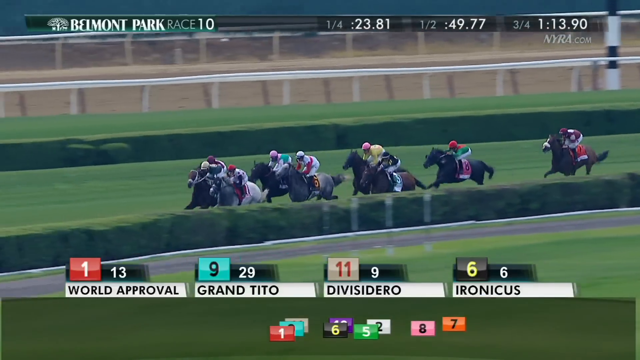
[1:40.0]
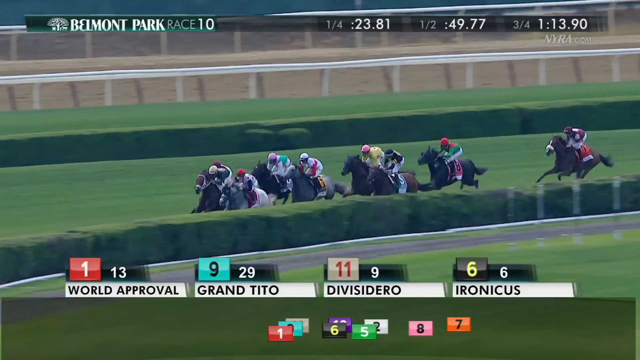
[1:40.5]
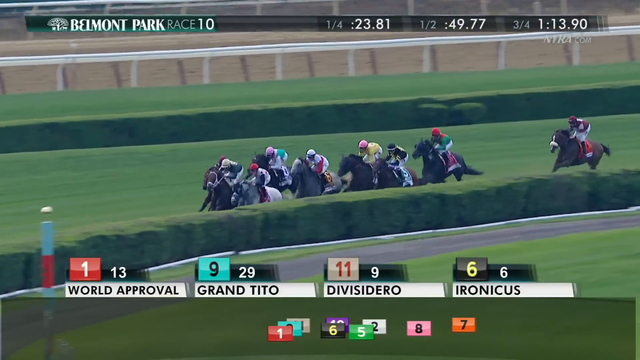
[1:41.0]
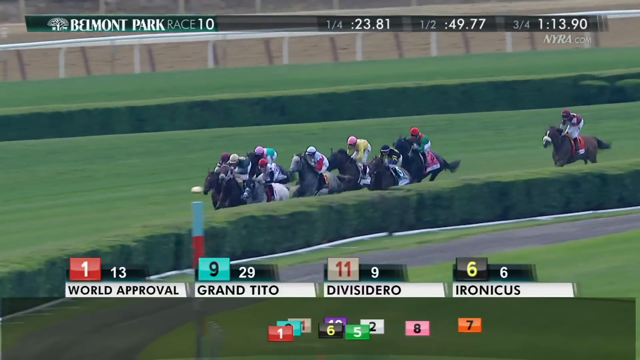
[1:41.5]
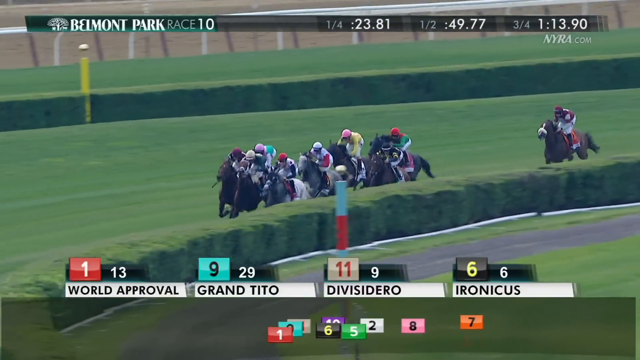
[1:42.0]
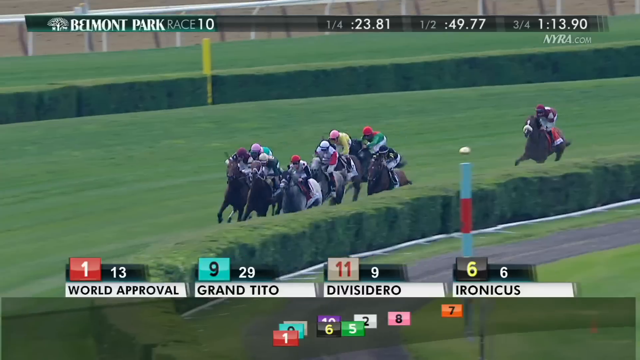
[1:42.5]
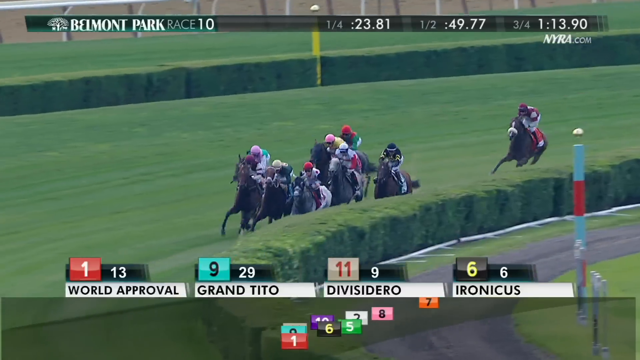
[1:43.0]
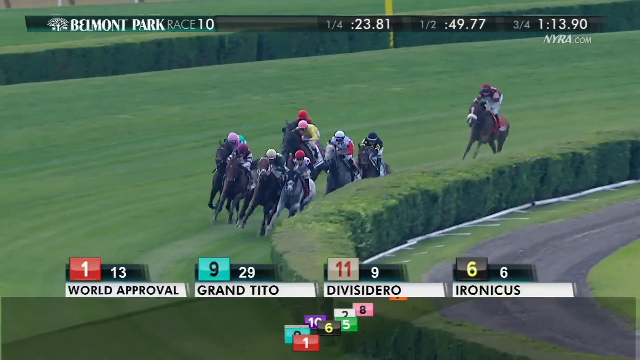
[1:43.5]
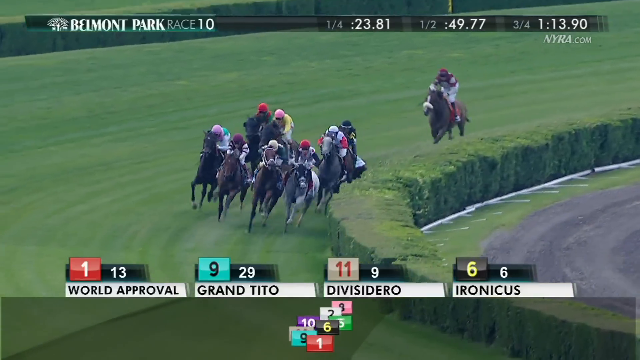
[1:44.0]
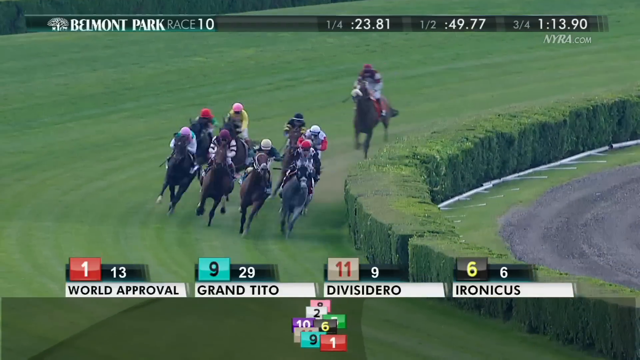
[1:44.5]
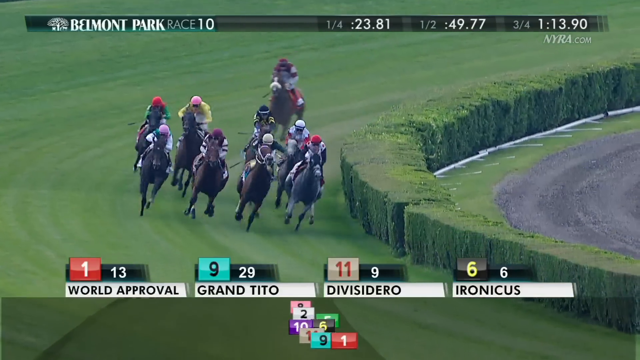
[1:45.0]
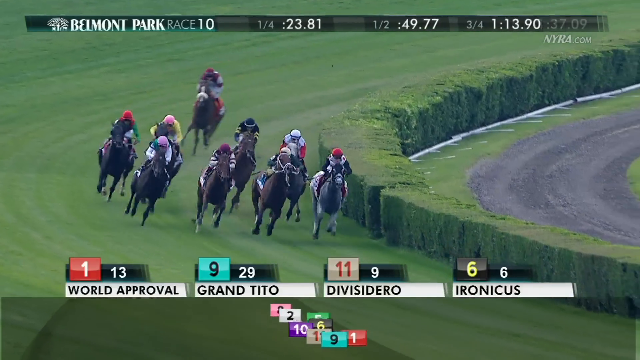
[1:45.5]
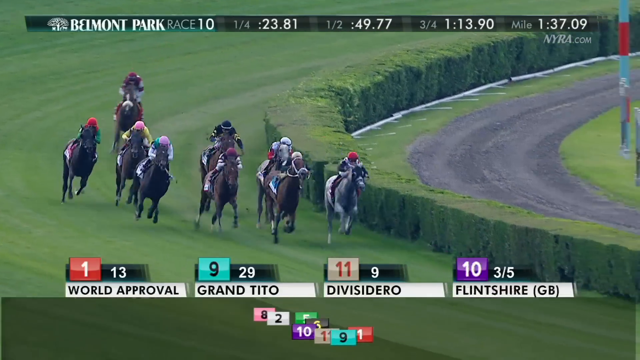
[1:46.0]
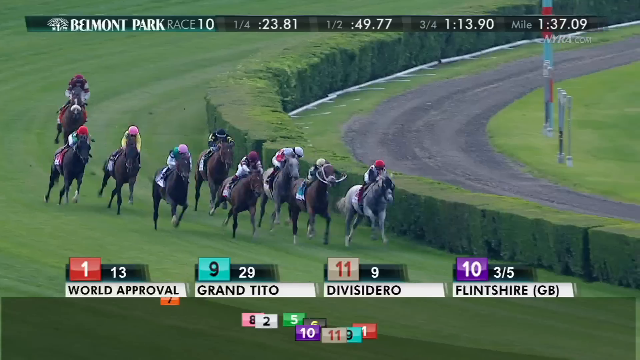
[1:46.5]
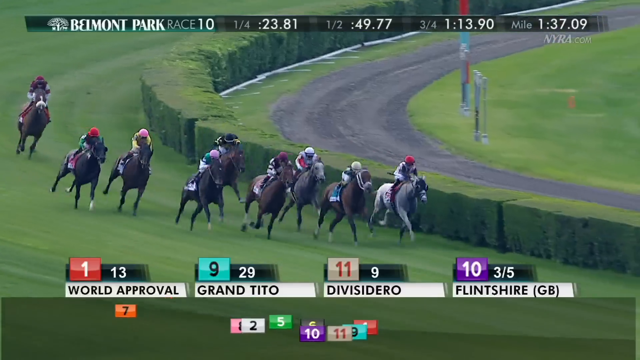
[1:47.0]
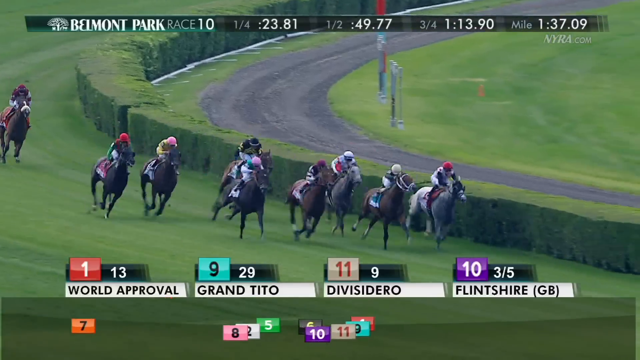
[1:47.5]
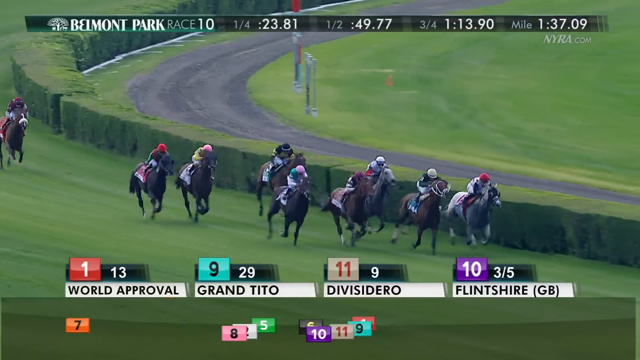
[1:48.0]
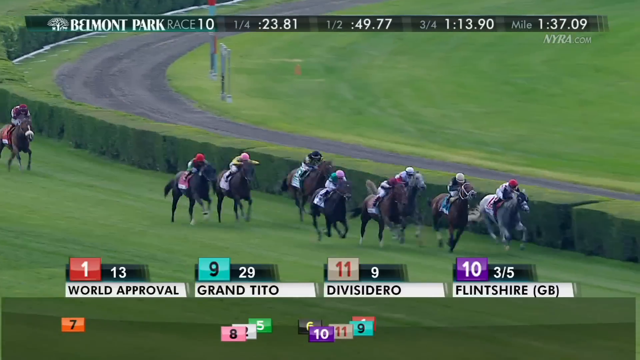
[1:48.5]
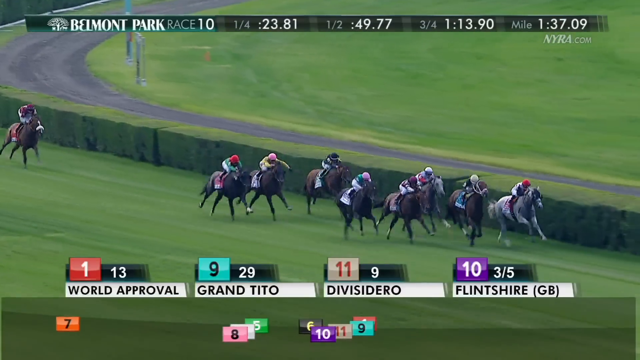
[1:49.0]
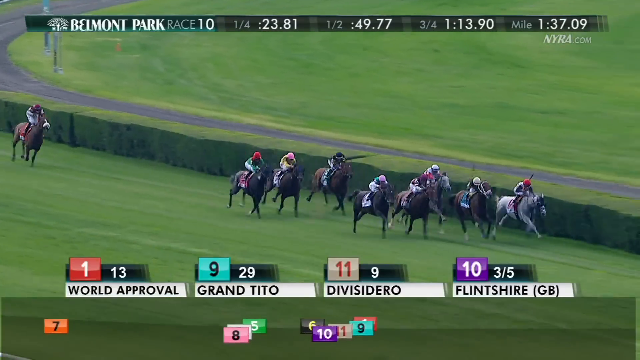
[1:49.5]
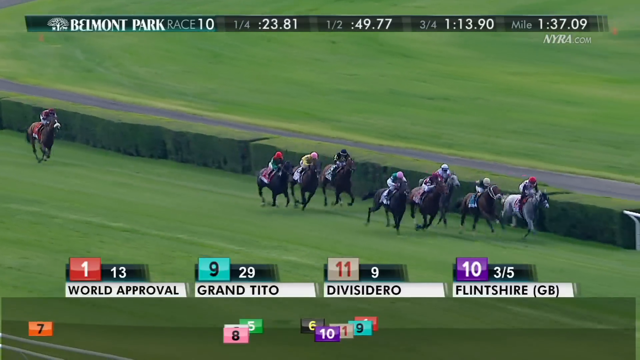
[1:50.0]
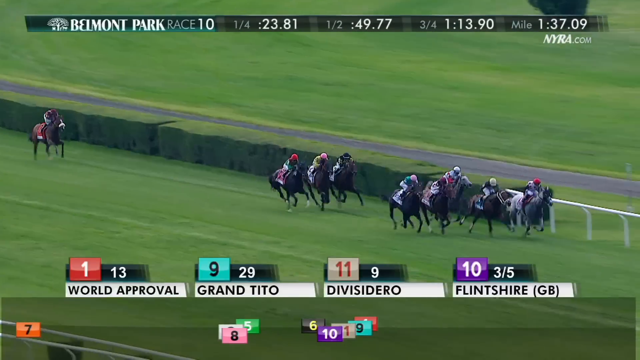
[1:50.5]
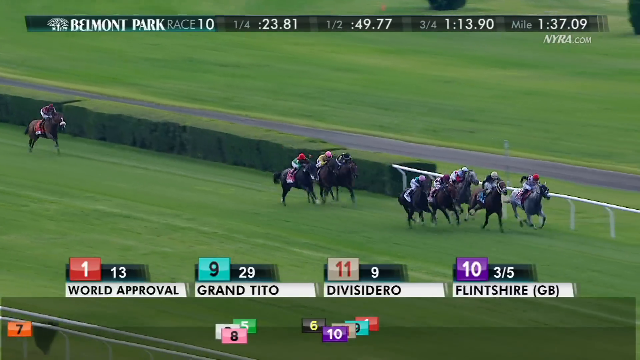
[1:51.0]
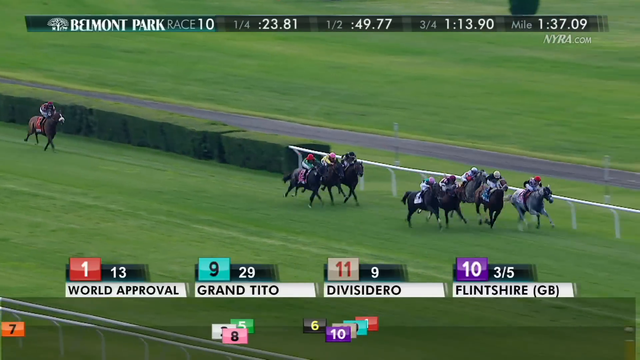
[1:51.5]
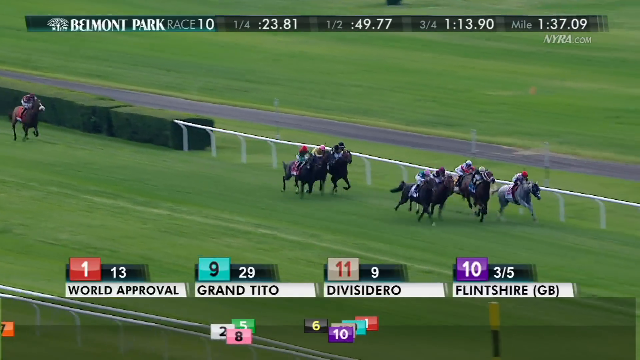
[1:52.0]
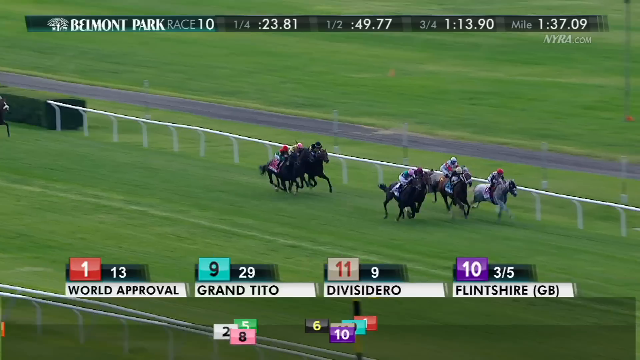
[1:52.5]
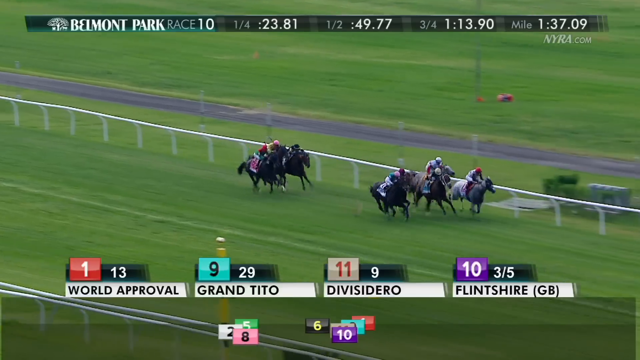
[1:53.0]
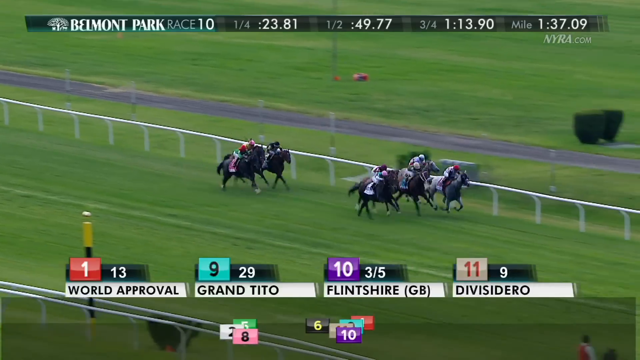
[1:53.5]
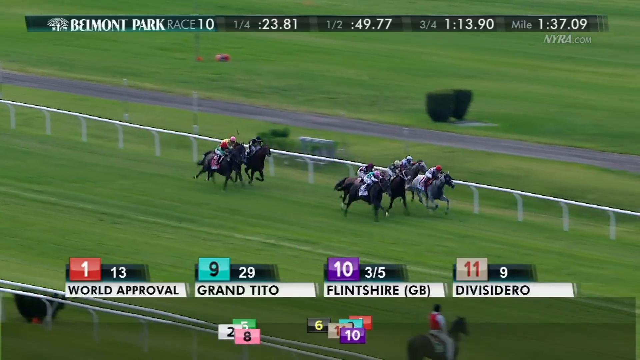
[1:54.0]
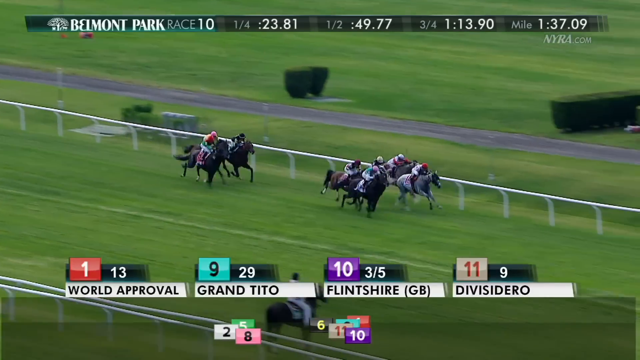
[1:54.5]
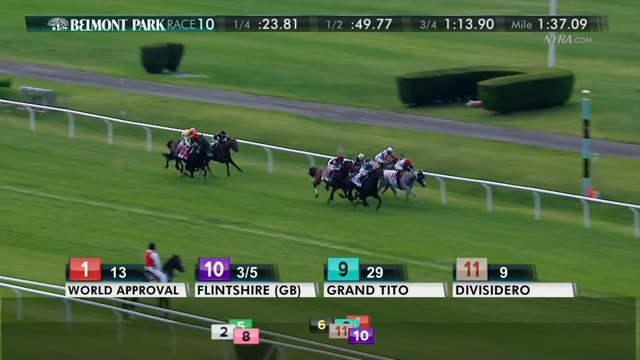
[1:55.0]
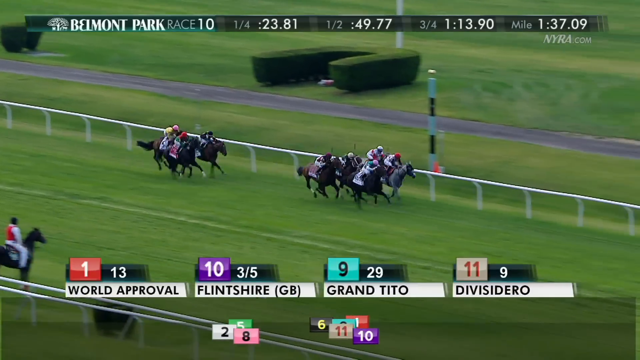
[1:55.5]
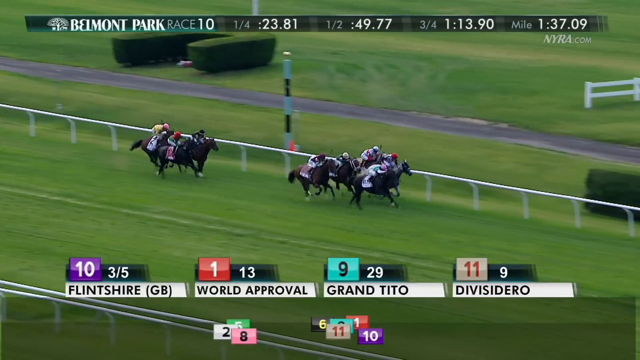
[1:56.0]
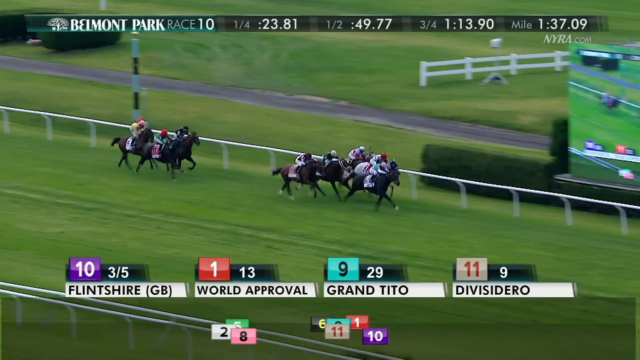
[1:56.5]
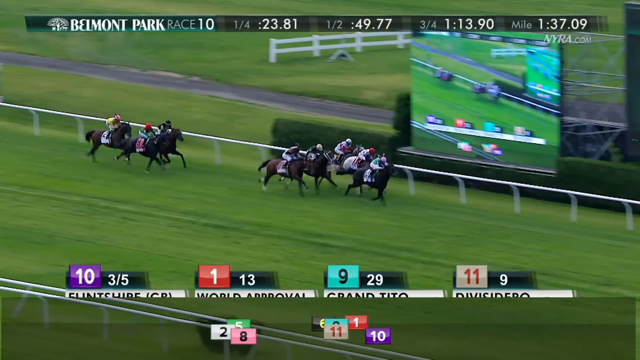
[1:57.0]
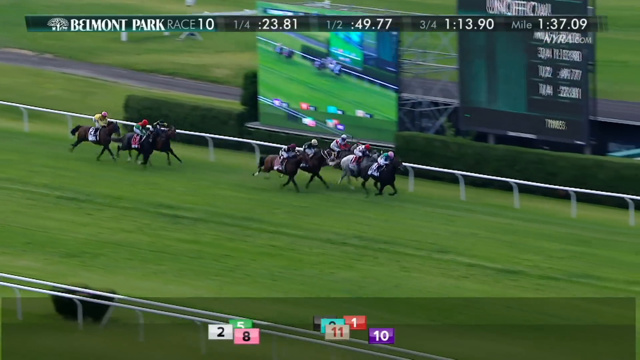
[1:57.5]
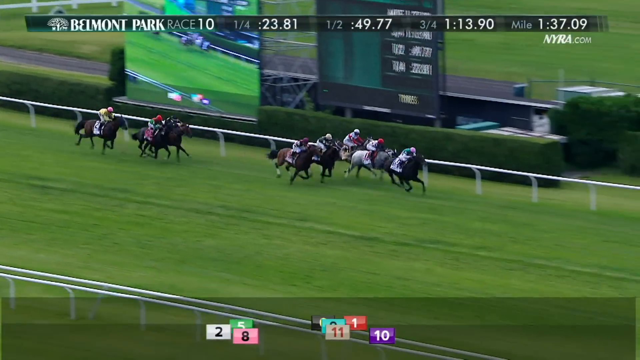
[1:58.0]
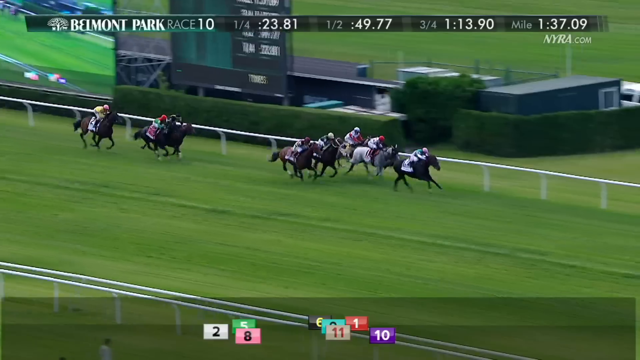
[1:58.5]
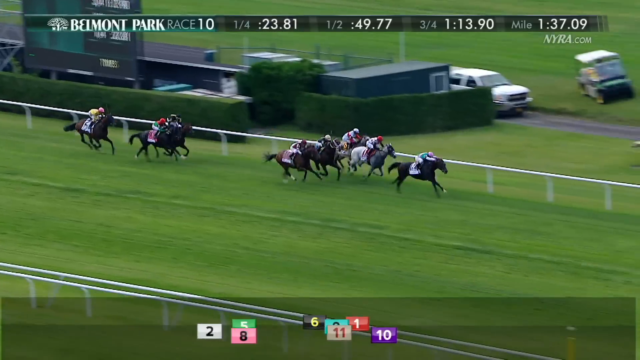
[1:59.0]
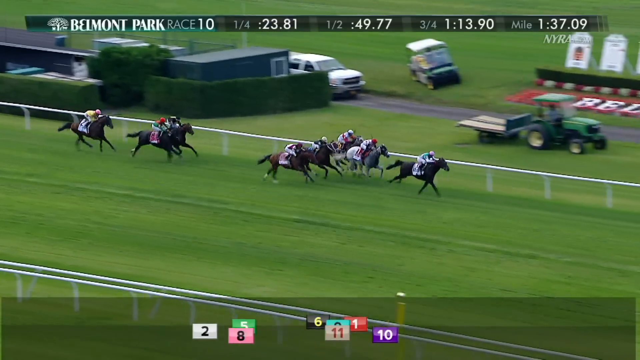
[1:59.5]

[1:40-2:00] A bunch of horses race down a track that is very green, with short green hedges around the outside and along the inner and outer track. At the top the text reads "Belmont Park Race 10", with a quarter-mile time of 23.81, a half-mile time of 49.77 and a three-quarter-mile time of 1:13.90. World Approval is in first, Grand Tito in second, Divisadero in third and Ironicus in fourth. The horses gallop with little change in placings until Flintshire takes fourth. They appear to reach the final stretch, where Flintshire takes second, then first, taking the lead and going past all the rest of the horses.